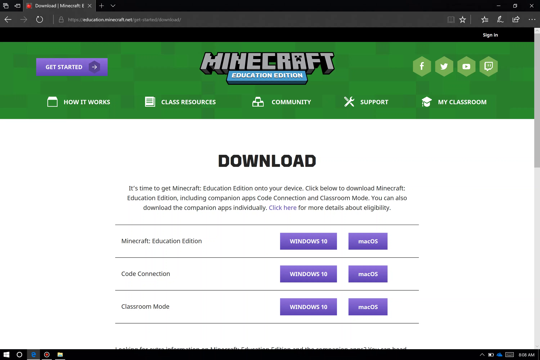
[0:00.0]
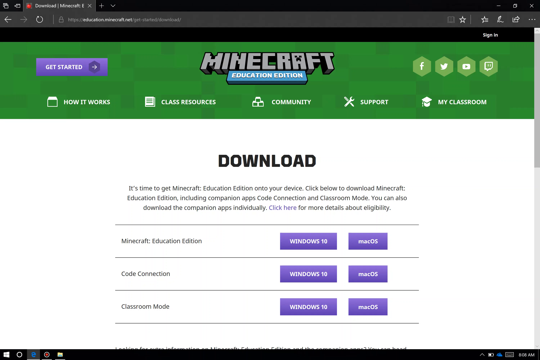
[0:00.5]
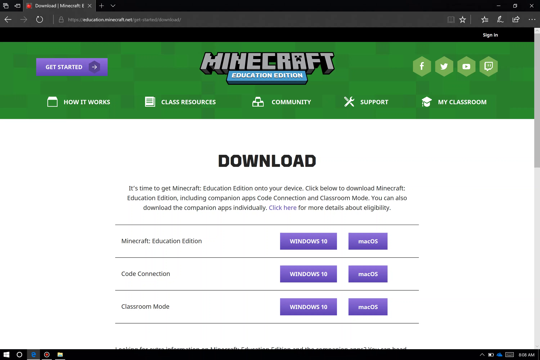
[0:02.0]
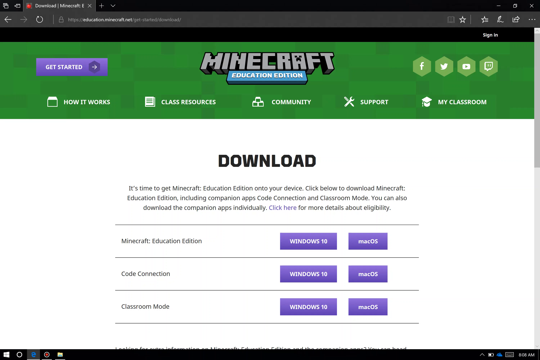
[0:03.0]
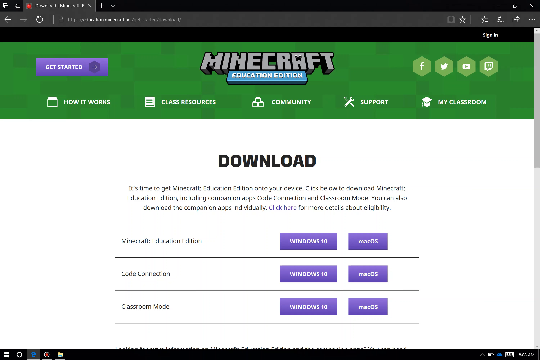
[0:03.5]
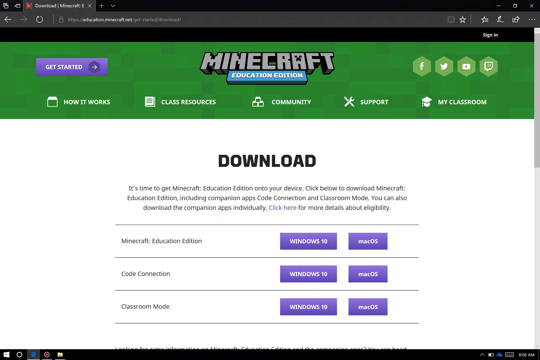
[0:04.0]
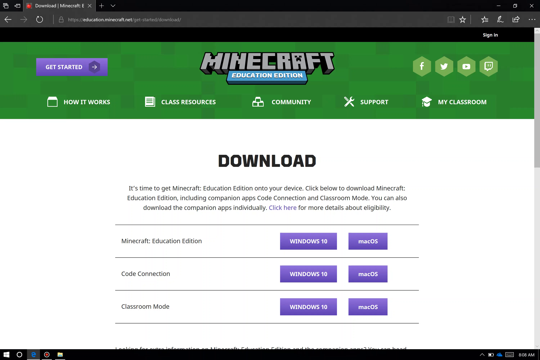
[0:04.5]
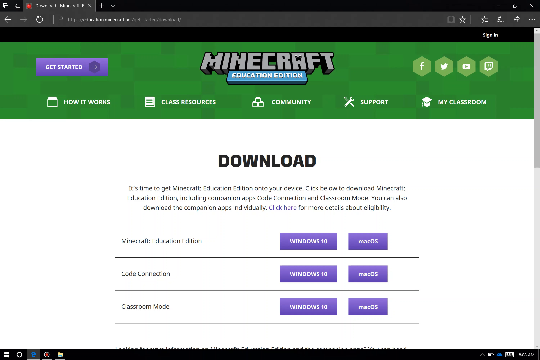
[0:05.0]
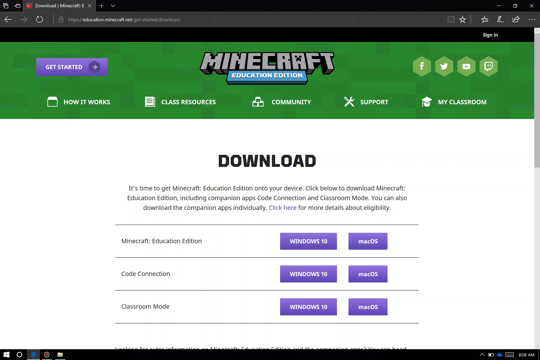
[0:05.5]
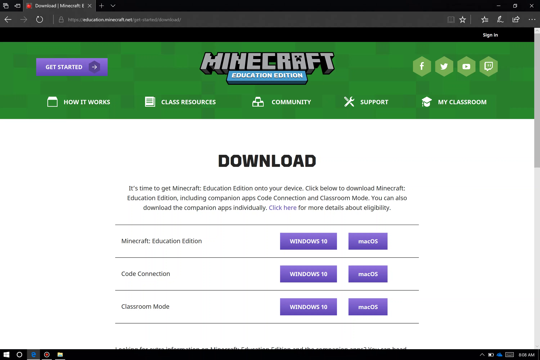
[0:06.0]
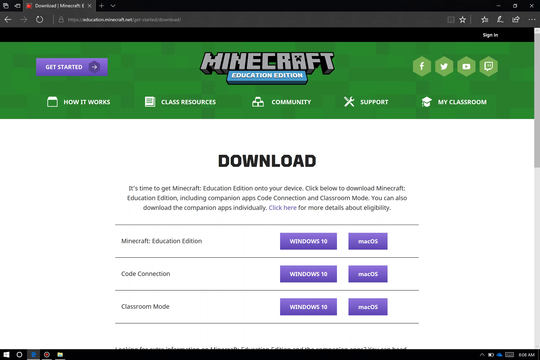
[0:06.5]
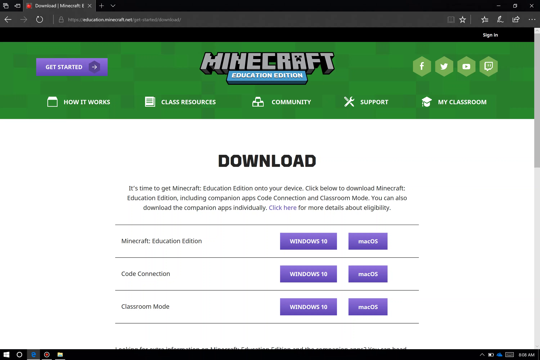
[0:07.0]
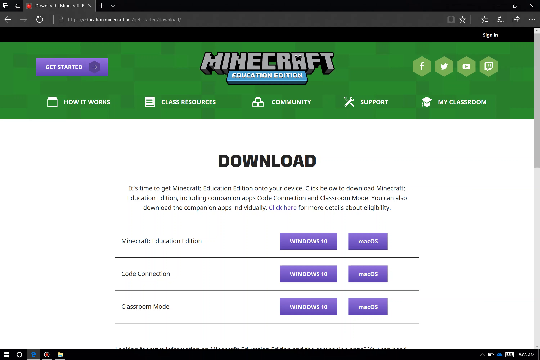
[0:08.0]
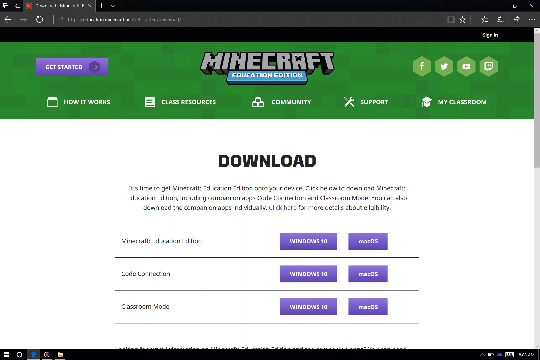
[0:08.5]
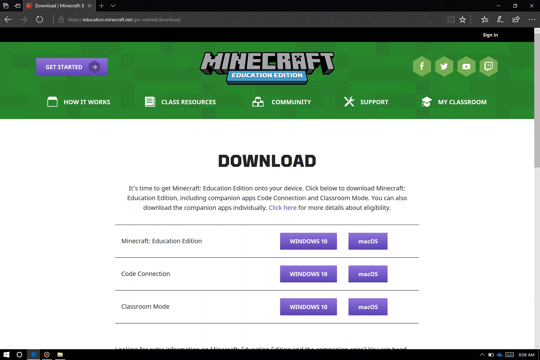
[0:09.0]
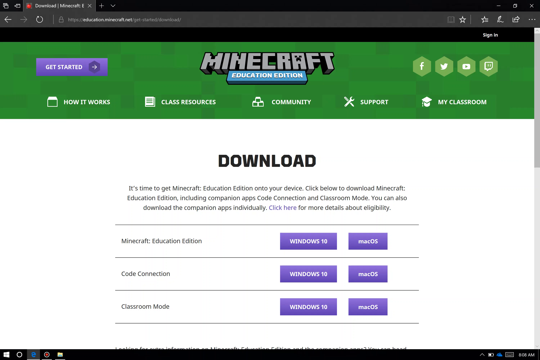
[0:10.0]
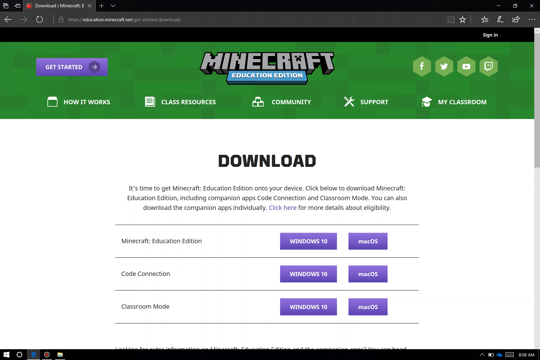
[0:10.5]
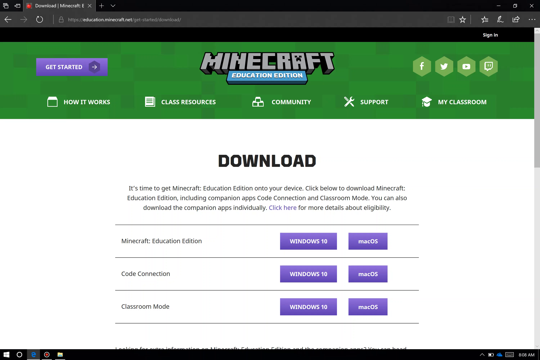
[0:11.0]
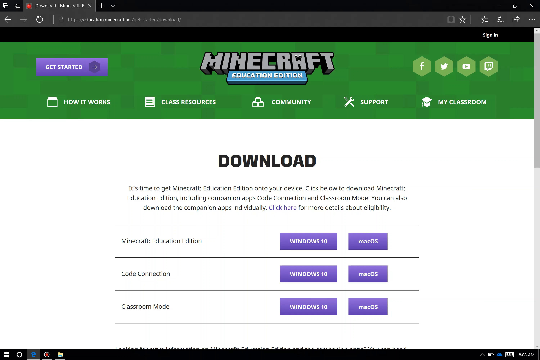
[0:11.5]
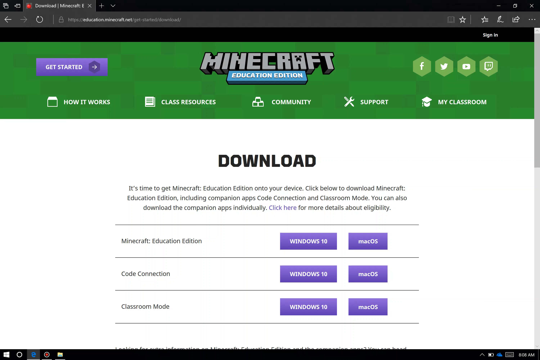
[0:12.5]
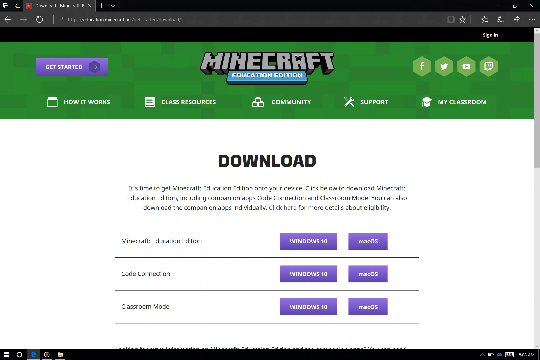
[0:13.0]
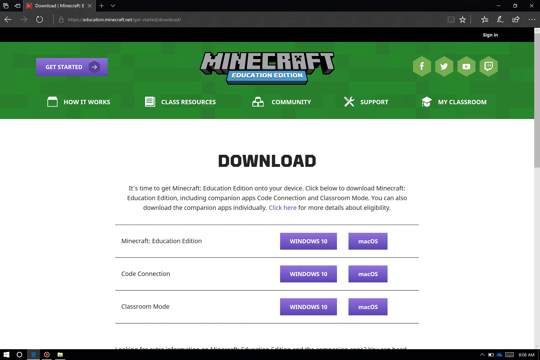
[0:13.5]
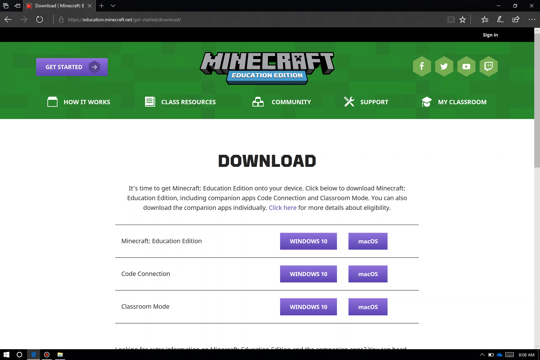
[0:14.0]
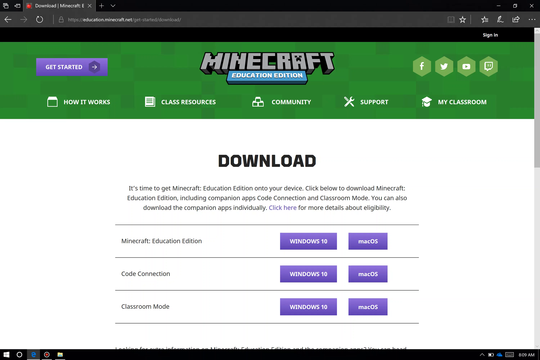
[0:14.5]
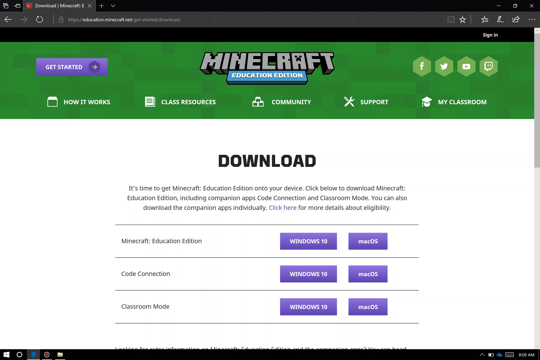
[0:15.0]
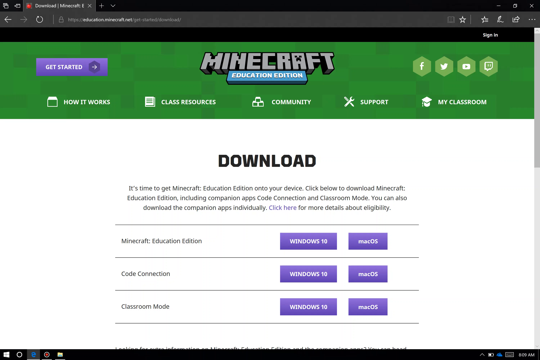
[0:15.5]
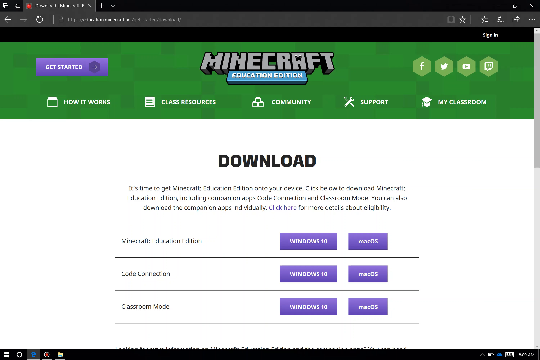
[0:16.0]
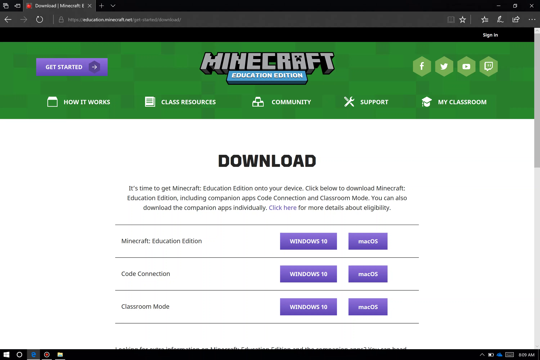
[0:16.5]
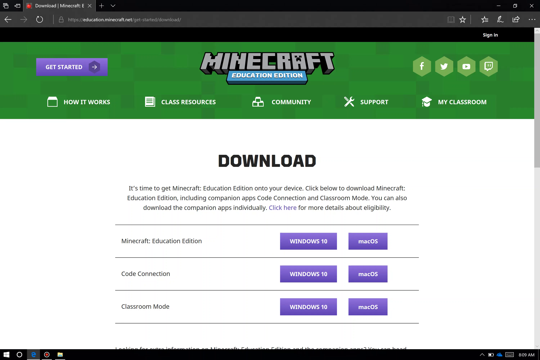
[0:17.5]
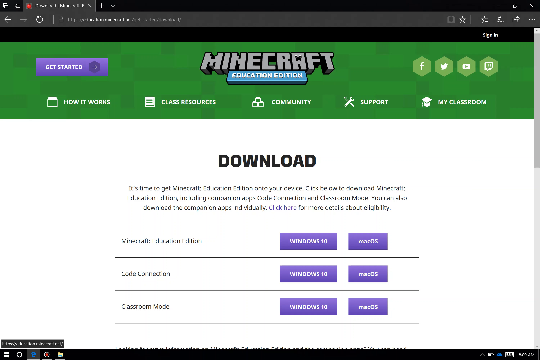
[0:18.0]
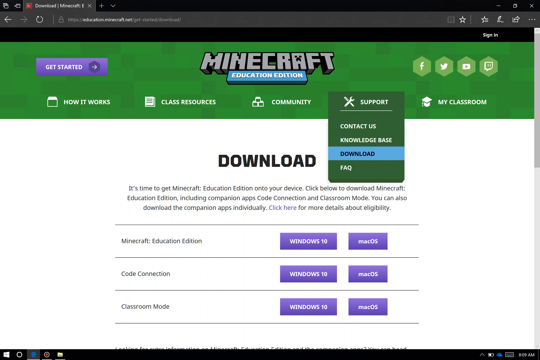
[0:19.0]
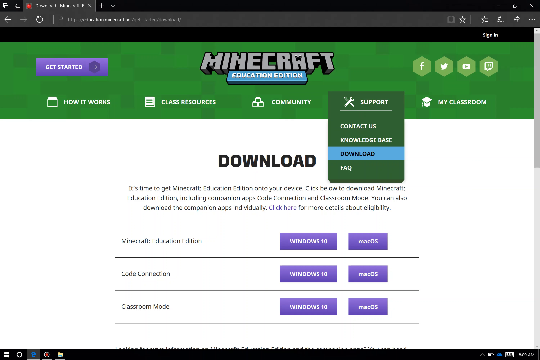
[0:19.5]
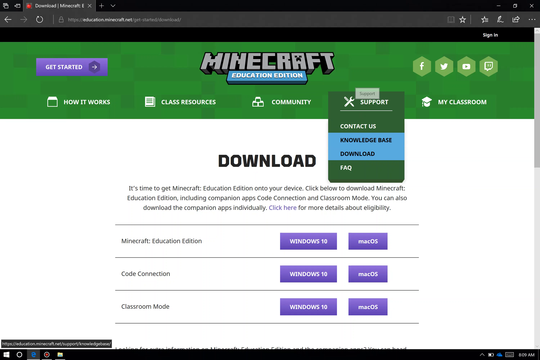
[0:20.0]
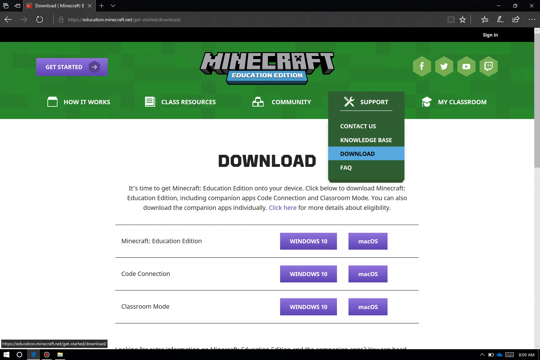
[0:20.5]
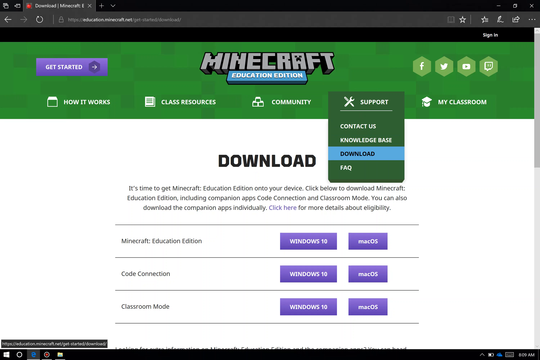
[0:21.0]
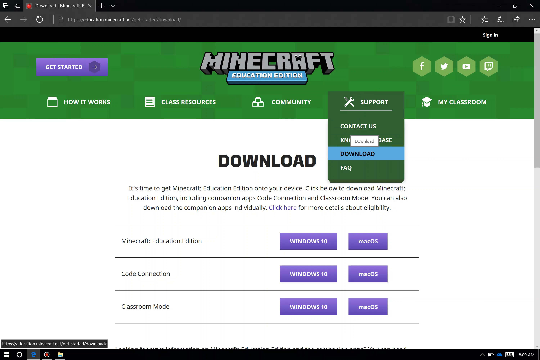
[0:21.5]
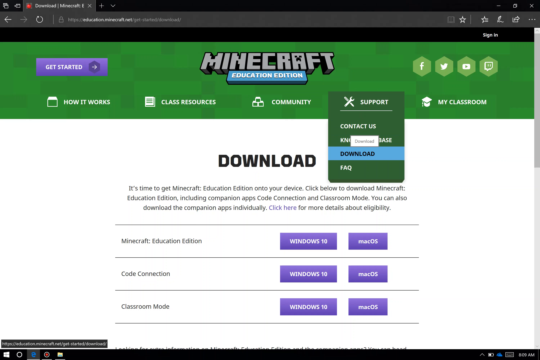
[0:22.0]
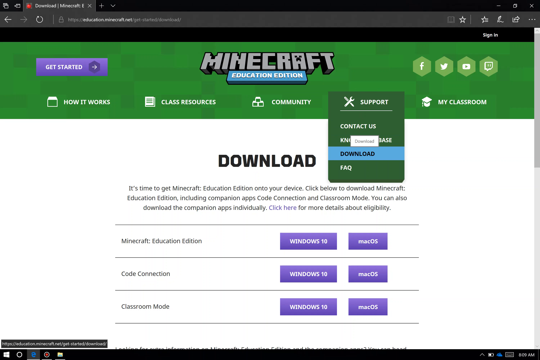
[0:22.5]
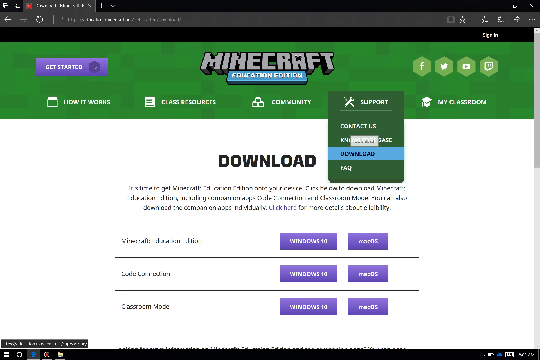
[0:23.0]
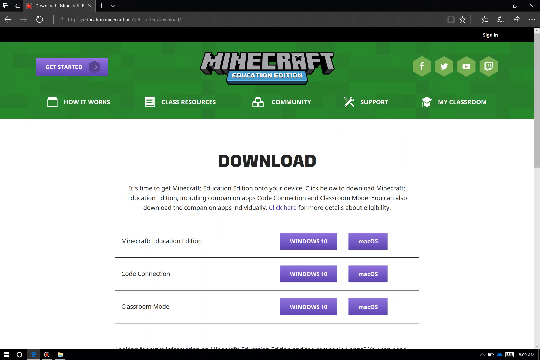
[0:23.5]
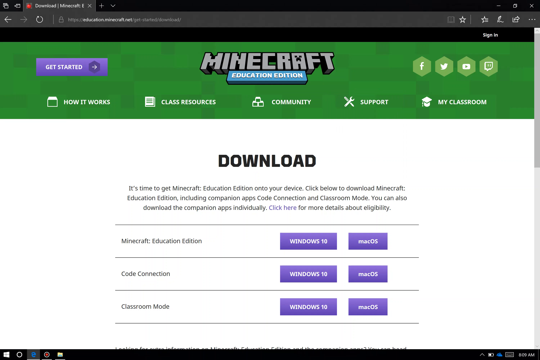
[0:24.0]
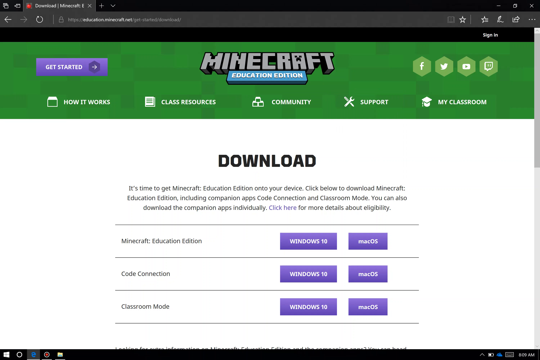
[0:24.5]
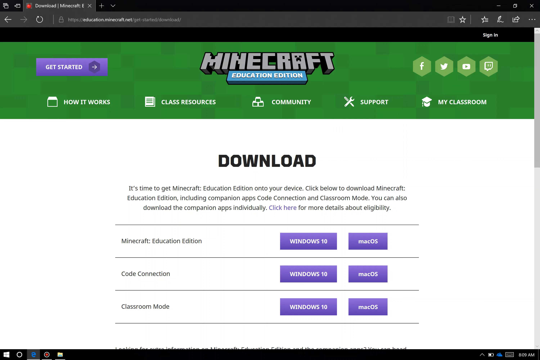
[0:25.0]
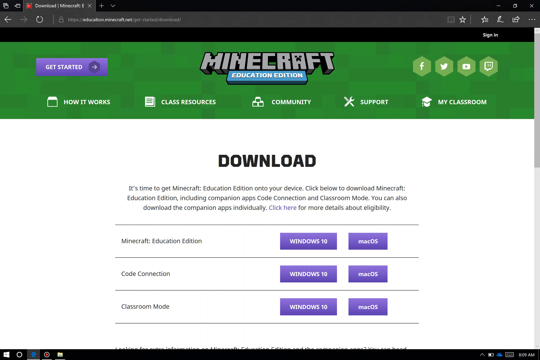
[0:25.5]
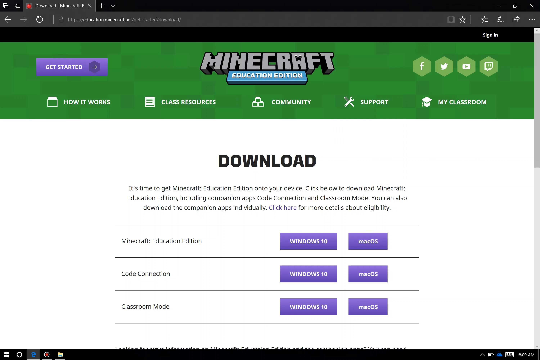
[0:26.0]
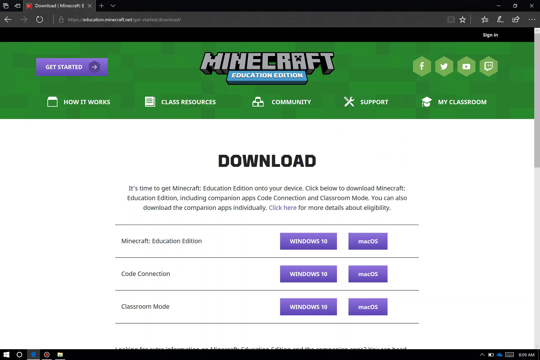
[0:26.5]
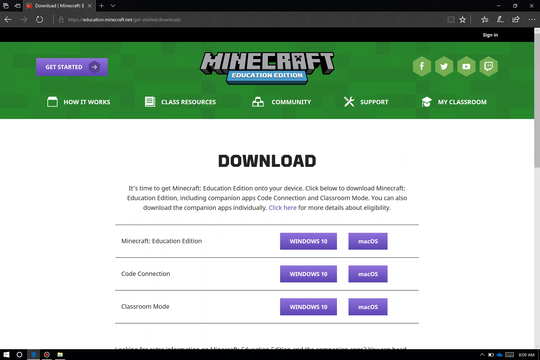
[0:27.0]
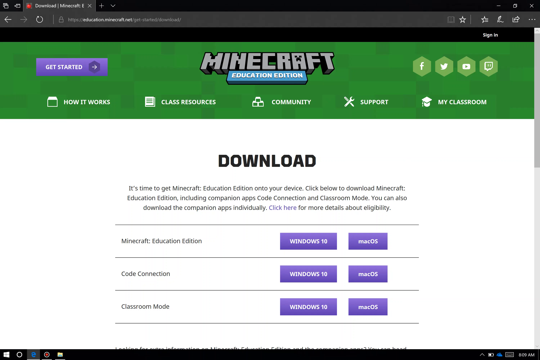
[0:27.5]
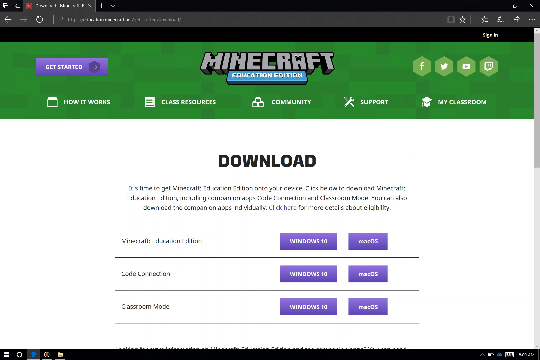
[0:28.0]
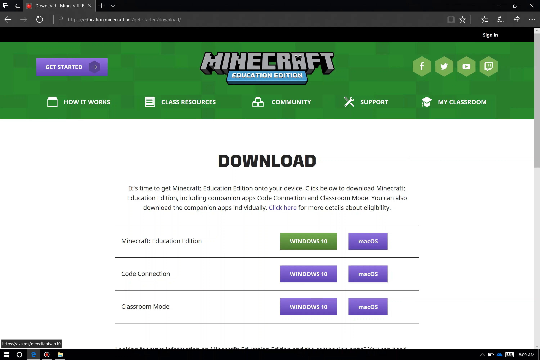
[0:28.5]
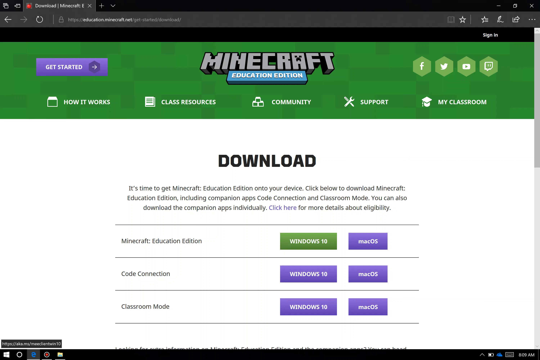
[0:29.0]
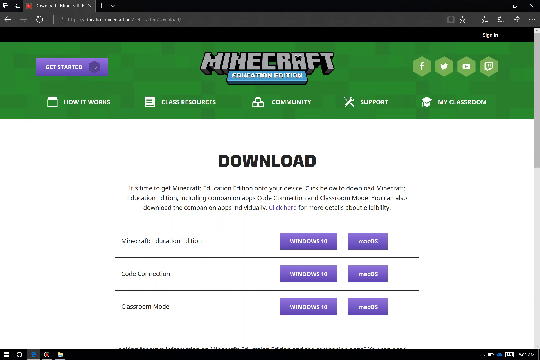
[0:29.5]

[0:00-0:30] The Minecraft Education Edition download screen appears, probably as part of a tutorial on downloading Minecraft. Options for Windows 10 and Mac OS are presented in purple text boxes reading "download". The page text reads: "It's time to get Minecraft Education Edition onto your device. Click below to download Minecraft Education Edition including companion apps, code connection, and classroom mode. You can also download the companion apps individually. Click here for more details about eligibility". Under the large screen area is a subsection with how it works, class resources, community support, and my classroom. A purple text box says "get started" with an arrow icon and a hexagon. Hexagons also hold the Facebook, Twitter, YouTube, and Twitch logos for Minecraft. Nothing is moving. The cursor hovers under the support tab, with download and FAQ highlighted, so the video is probably showing where to navigate to reach this page.